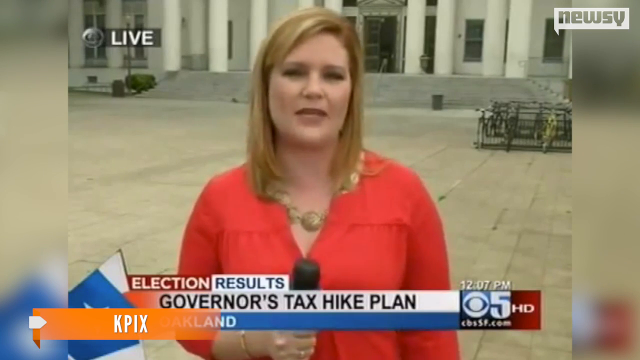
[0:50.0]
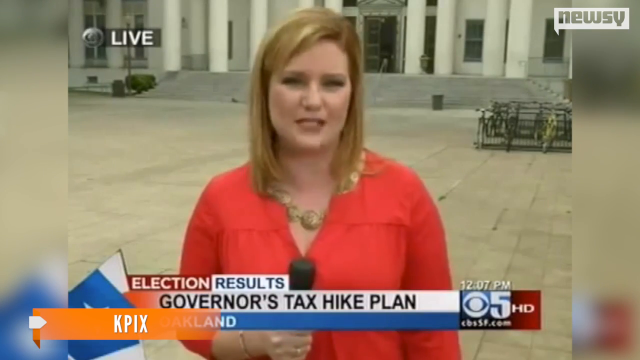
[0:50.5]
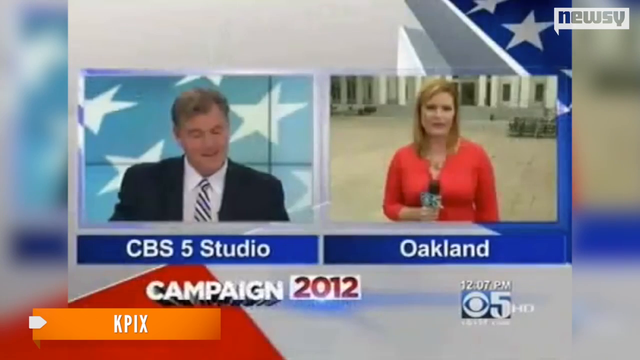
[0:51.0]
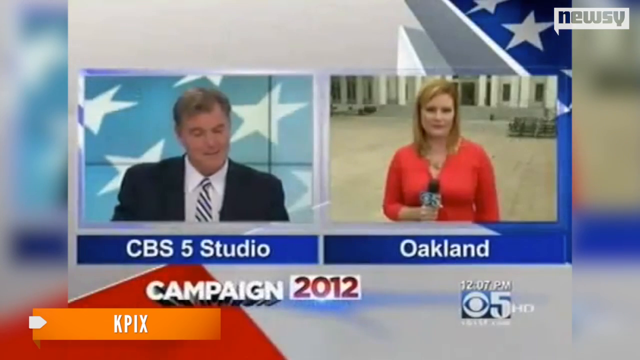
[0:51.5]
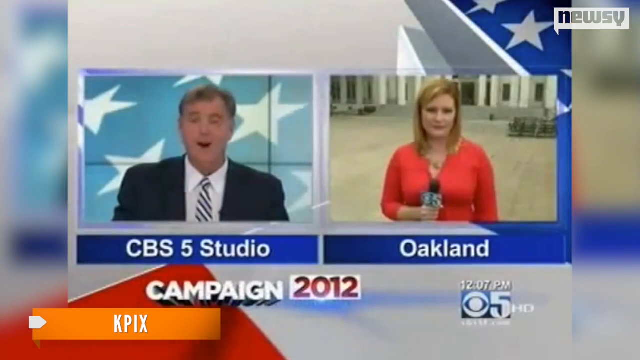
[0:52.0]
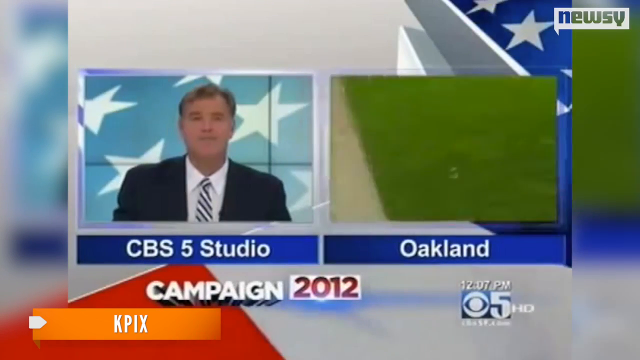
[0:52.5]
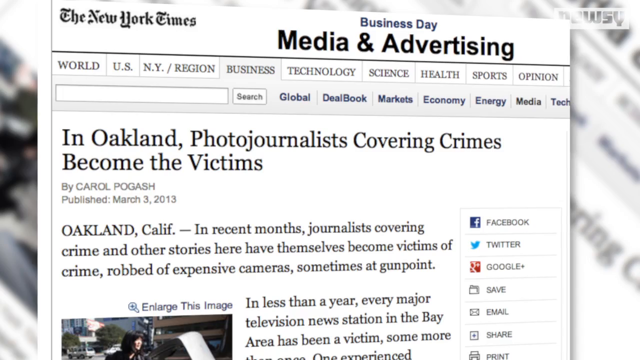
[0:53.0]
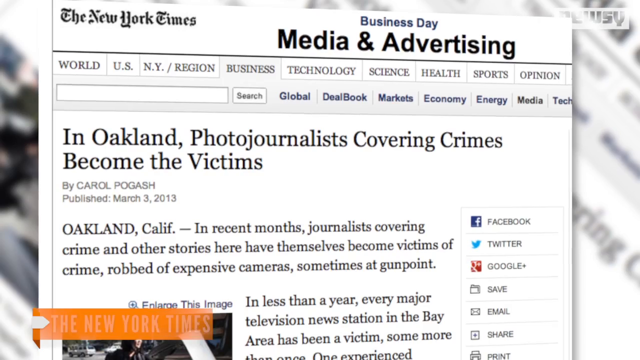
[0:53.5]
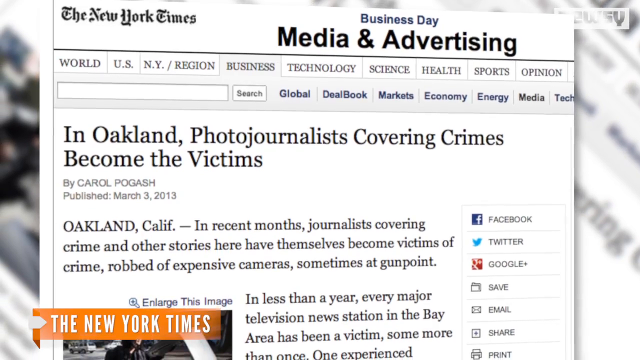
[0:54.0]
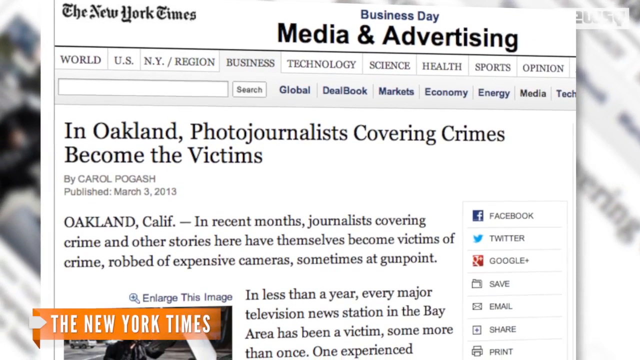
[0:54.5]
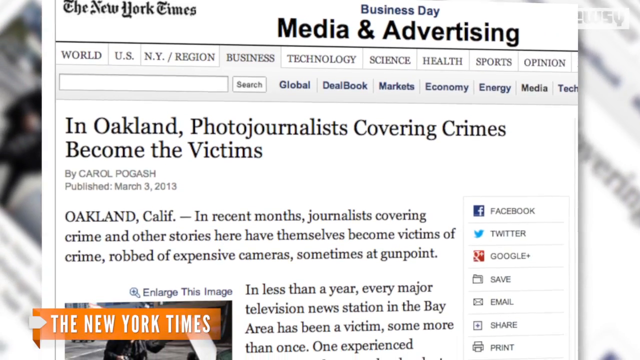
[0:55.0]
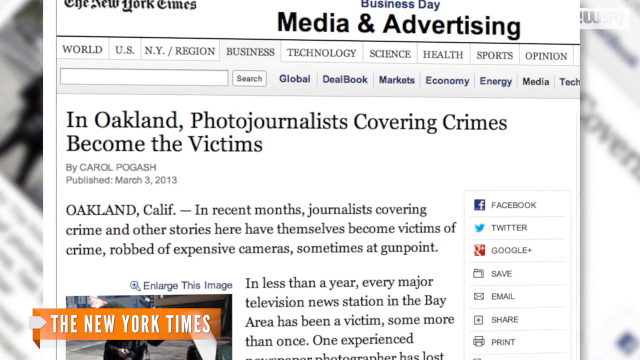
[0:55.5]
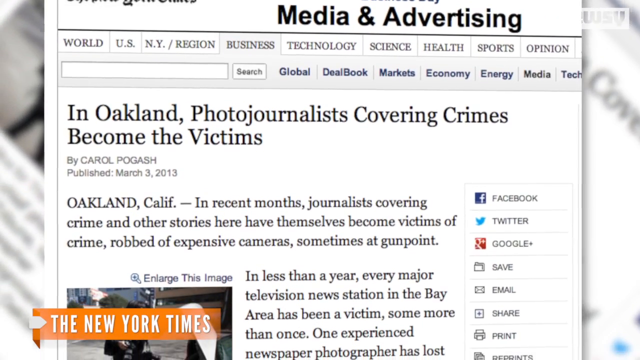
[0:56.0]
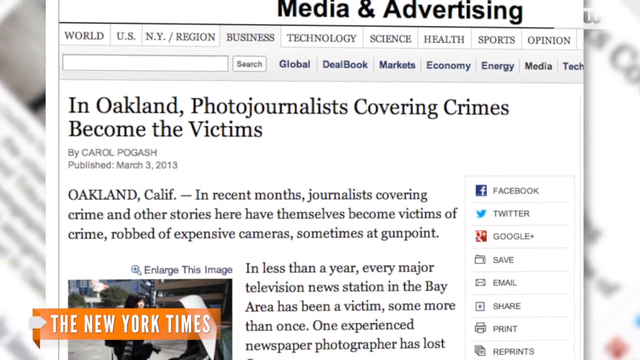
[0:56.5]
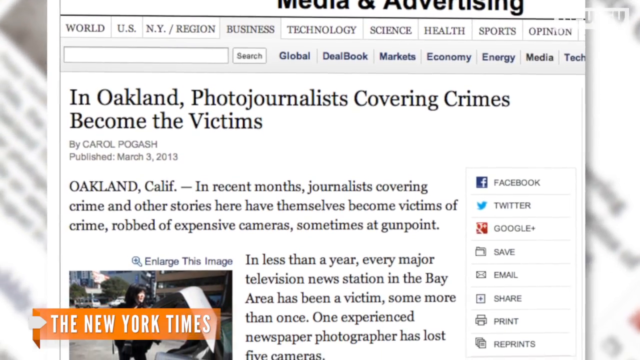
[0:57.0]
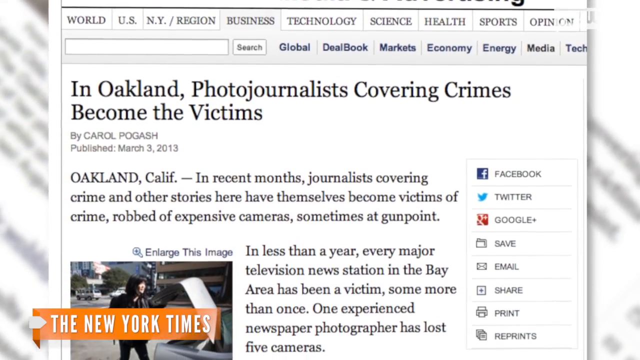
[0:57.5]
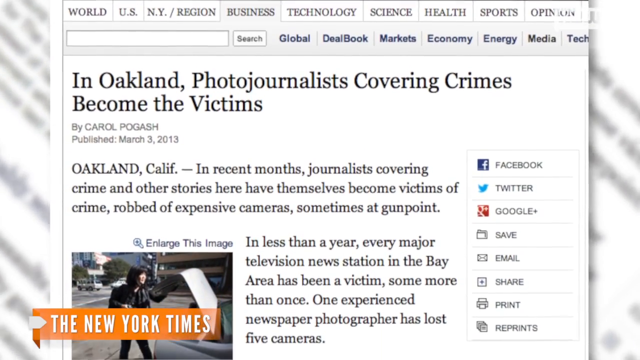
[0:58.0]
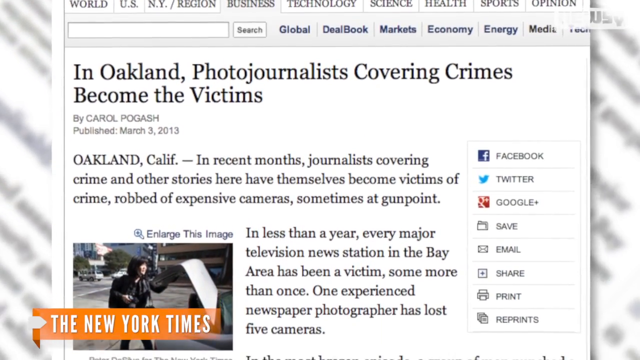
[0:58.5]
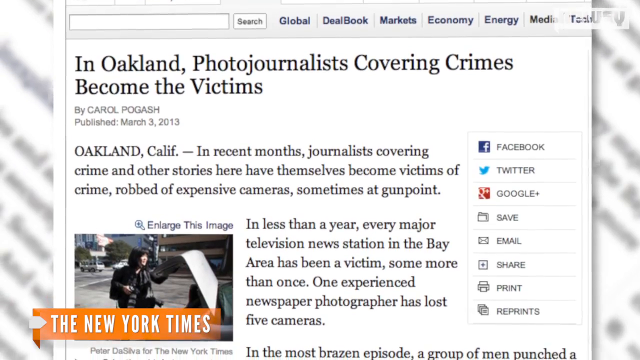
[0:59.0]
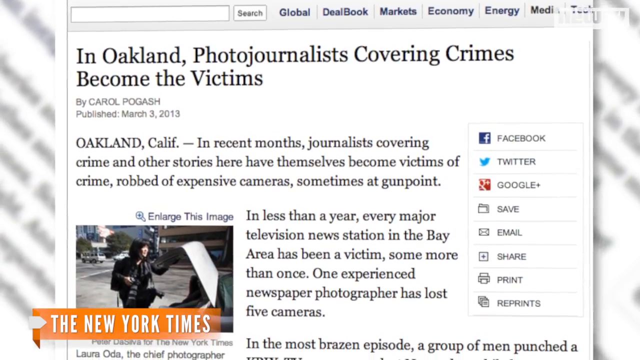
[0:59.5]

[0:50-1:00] The reporter from Oakland wears a red collared shirt with a V-cut down the neck and talks to the news person at the CBS 5 studio. At the bottom of the screen is "campaign 2012", the bottom left shows "KPIX", the bottom right shows the time, and "Channel 5" or "05 HD" is visible. The reporter then disappears from the shot, leaving some kind of grass where she was. The video cuts to a post on the New York Times website reading "in Oakland, photojournalists covering crimes become the victims", by Carol Bogas, marked "published on March 3, 2013".